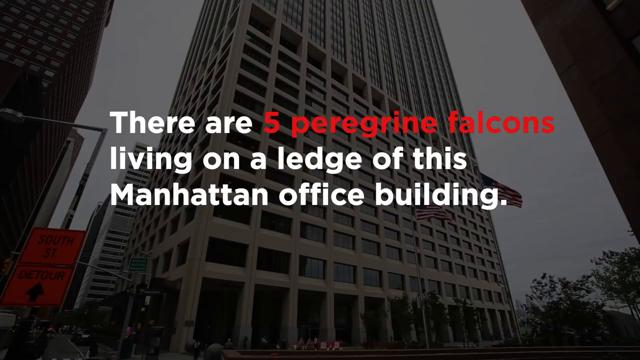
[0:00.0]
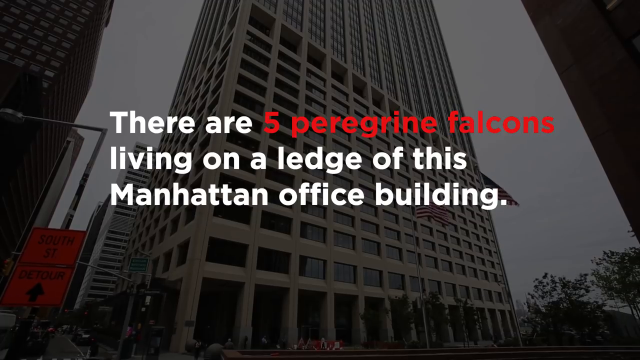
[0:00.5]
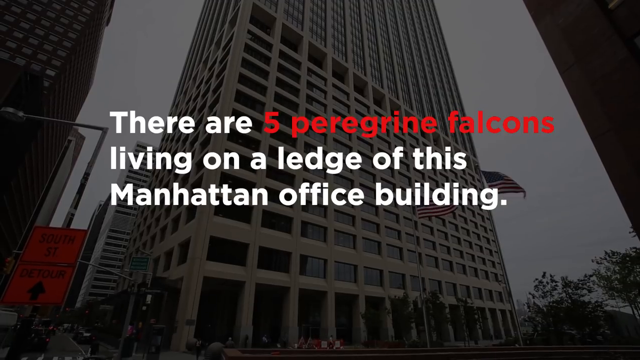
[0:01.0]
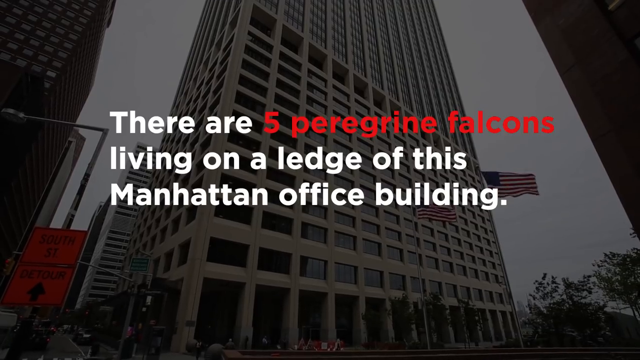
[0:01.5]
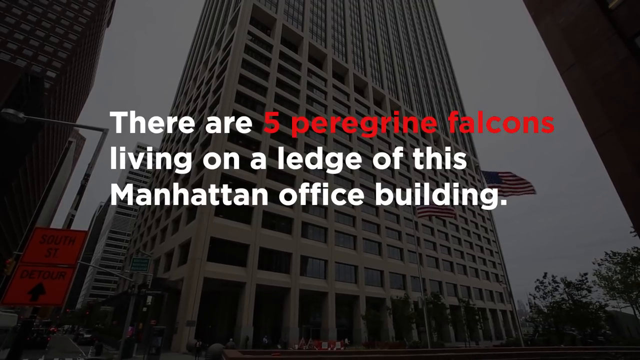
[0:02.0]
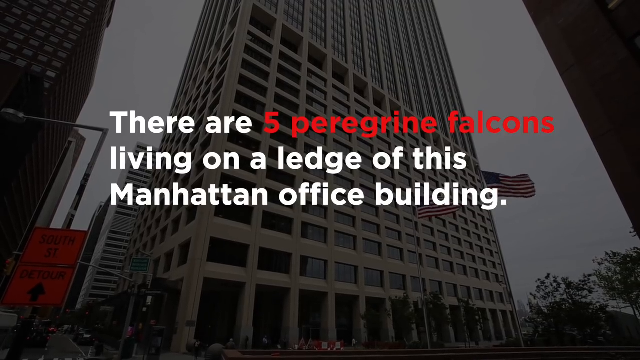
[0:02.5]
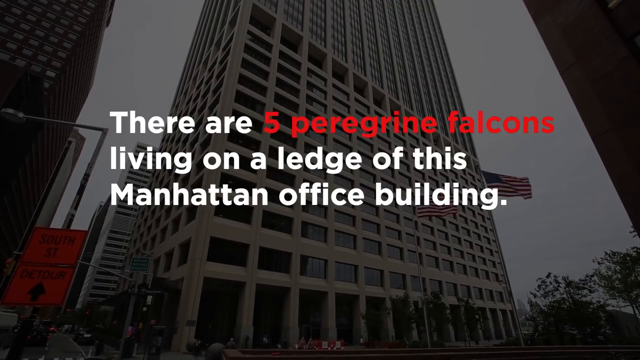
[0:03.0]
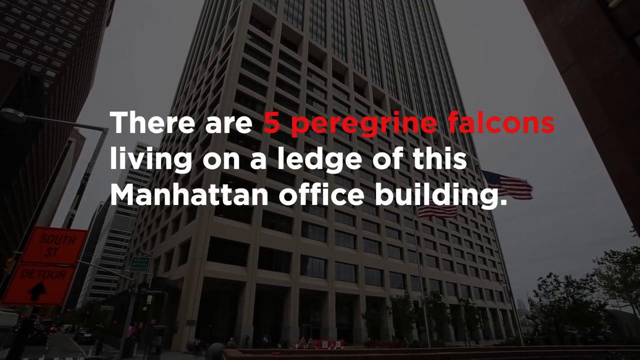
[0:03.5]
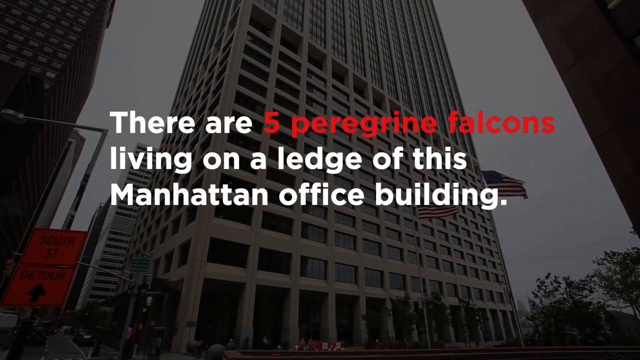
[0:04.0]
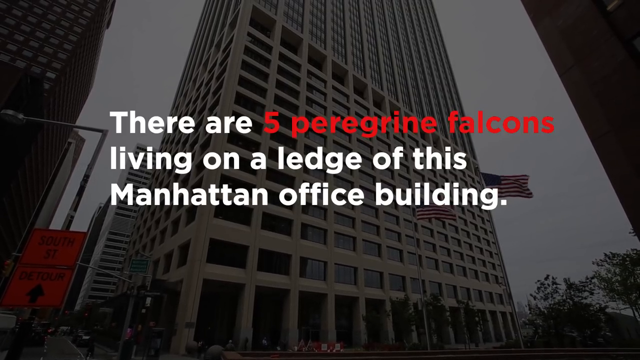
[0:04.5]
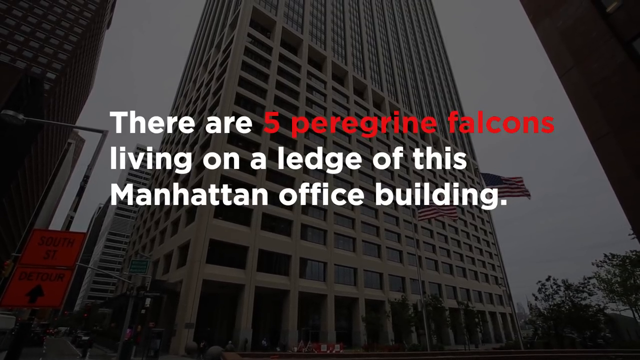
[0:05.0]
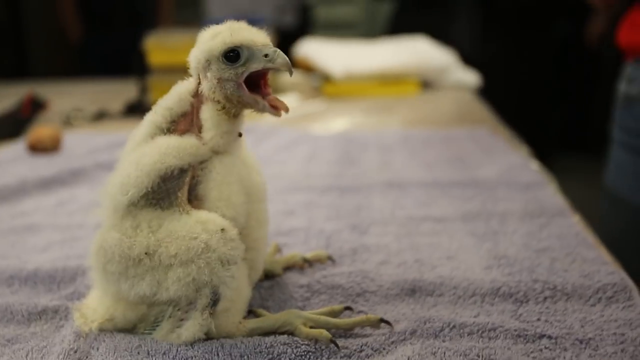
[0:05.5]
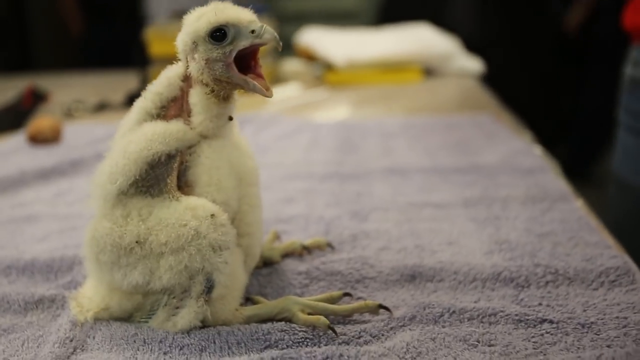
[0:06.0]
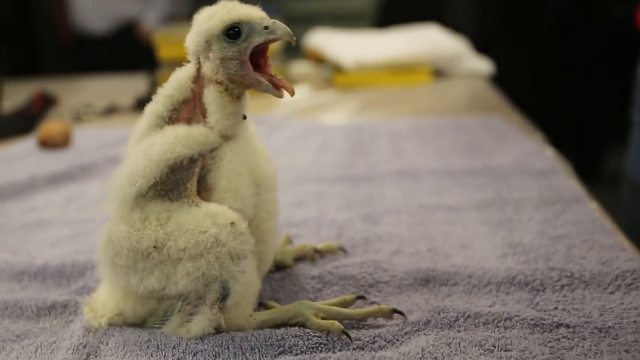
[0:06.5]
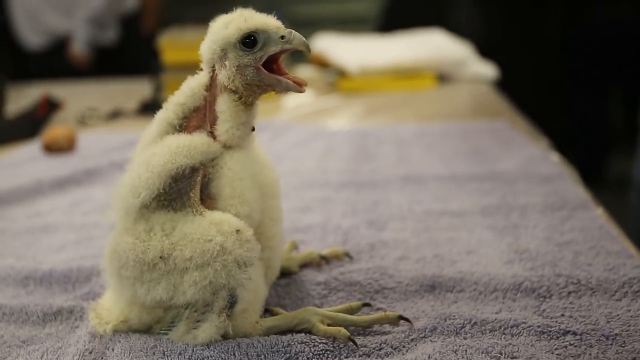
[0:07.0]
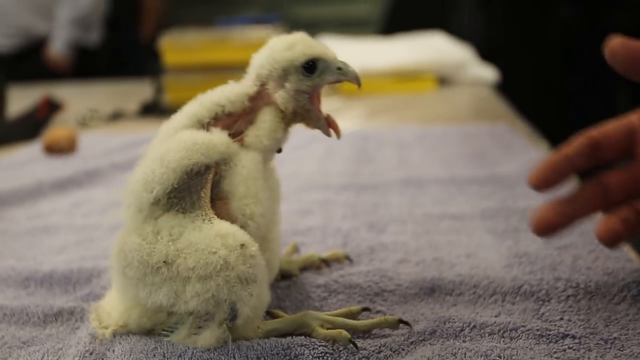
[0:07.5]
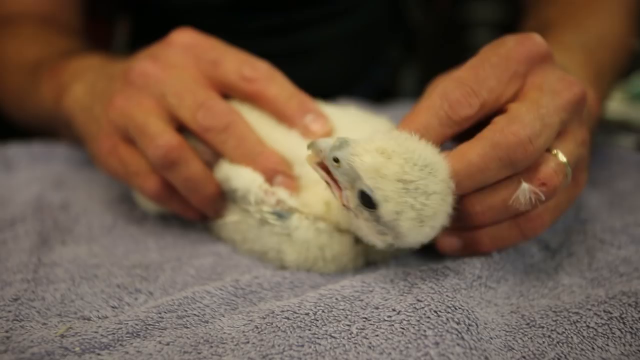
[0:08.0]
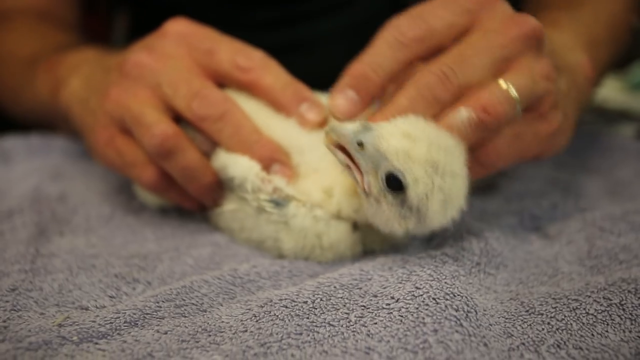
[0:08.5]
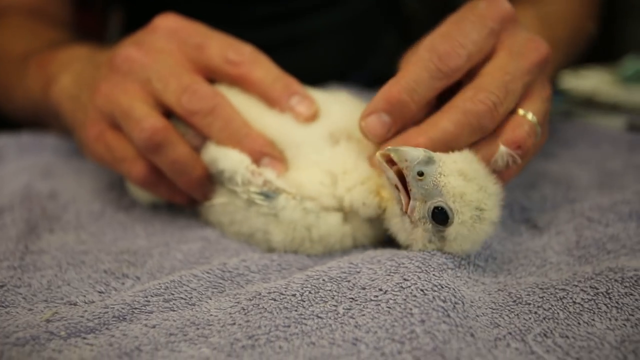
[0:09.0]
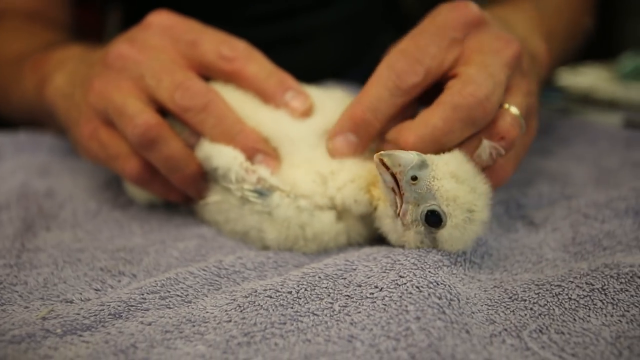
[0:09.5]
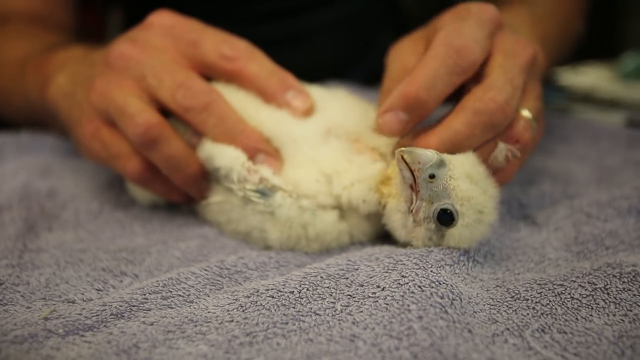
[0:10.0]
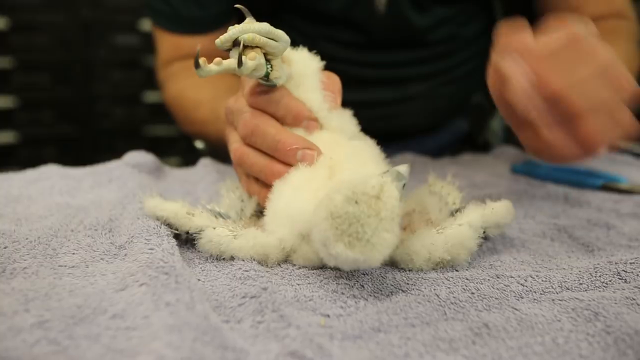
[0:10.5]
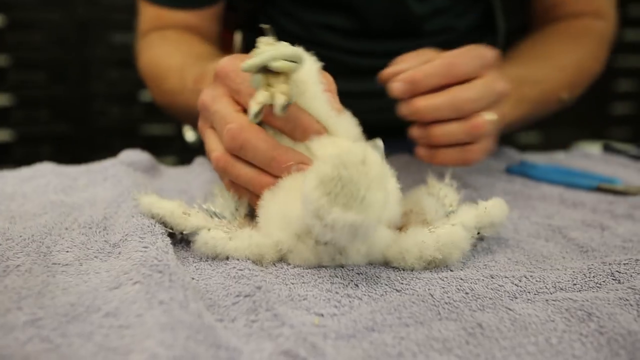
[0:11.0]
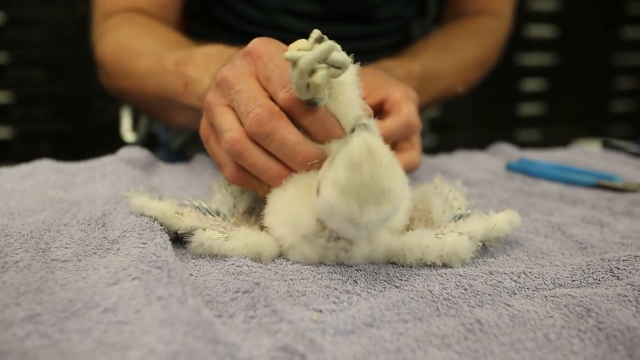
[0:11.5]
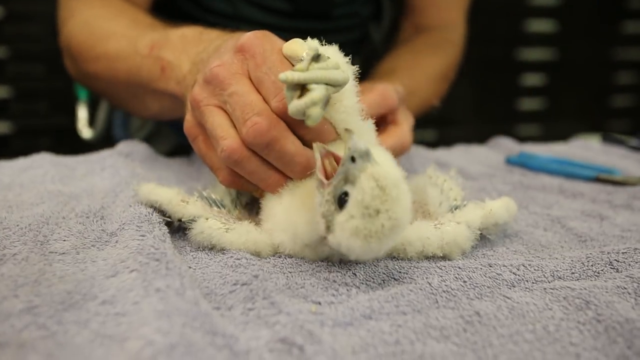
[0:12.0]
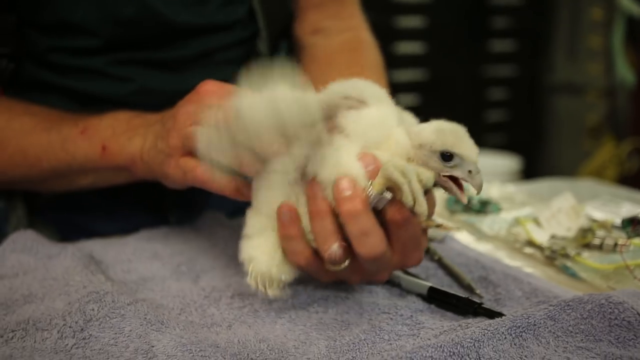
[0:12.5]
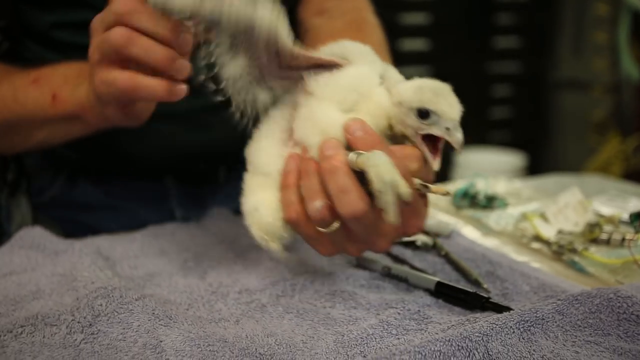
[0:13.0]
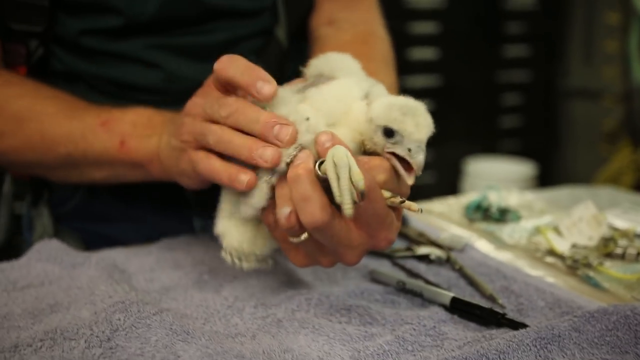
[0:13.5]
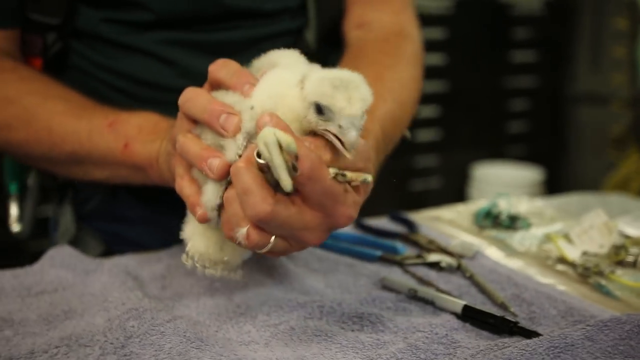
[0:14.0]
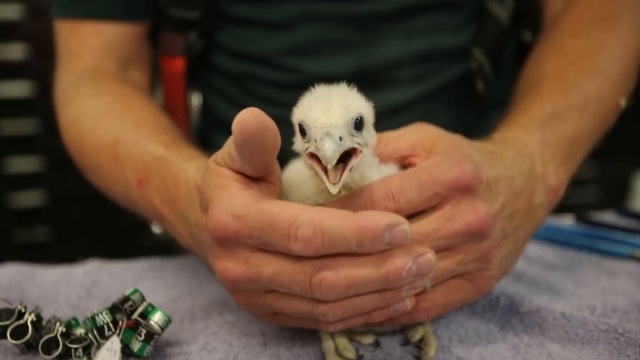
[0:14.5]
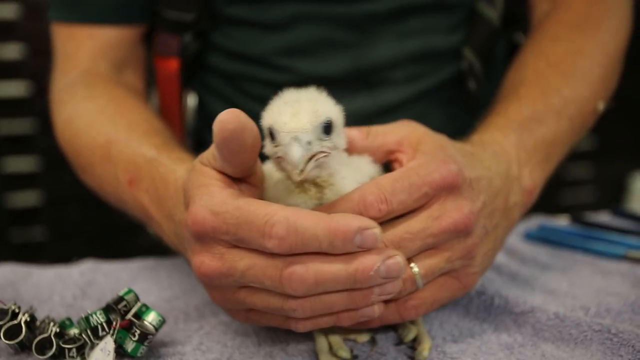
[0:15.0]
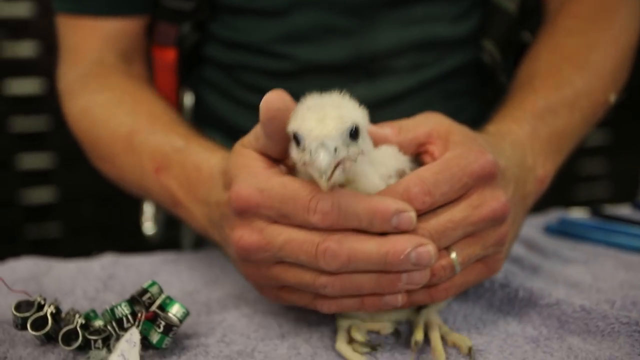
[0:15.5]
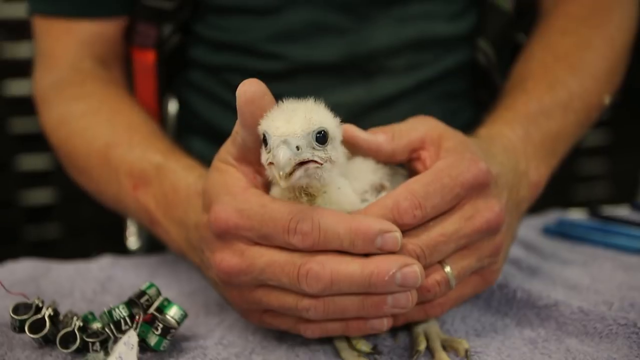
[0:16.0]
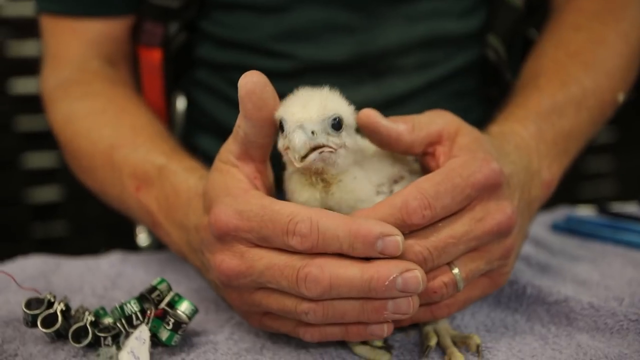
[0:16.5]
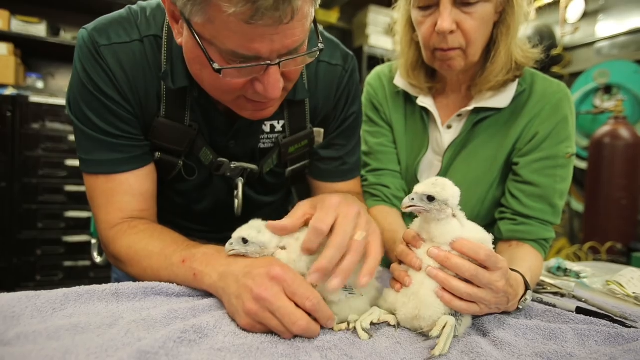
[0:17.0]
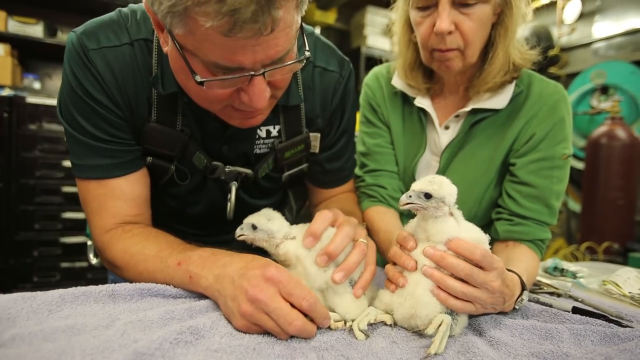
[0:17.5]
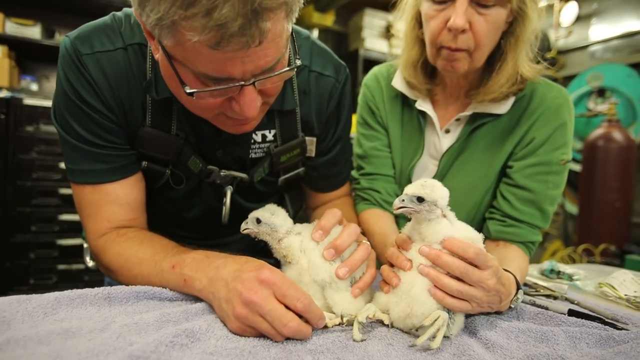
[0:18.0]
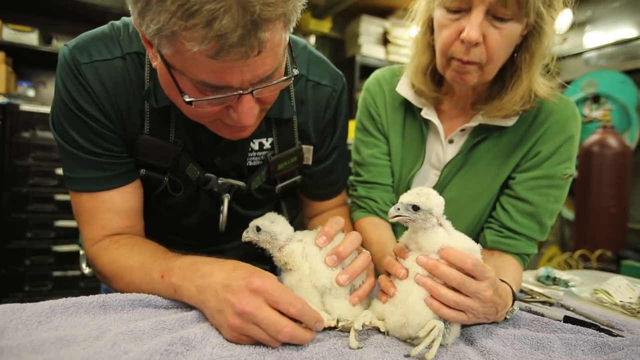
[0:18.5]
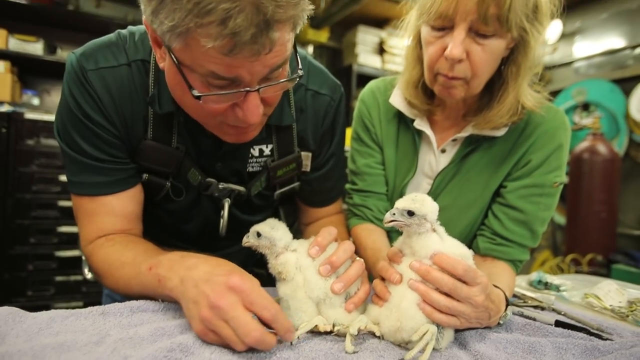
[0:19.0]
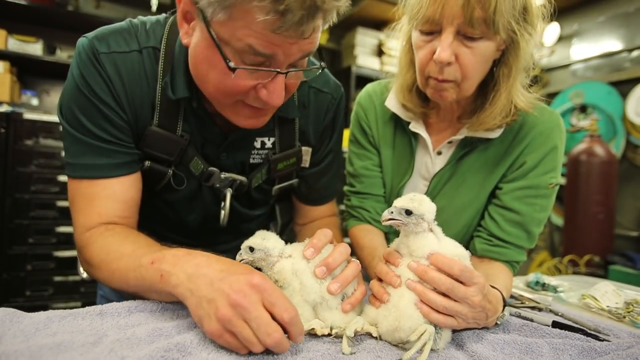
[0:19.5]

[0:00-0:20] A photograph of an office building appears with text in front of it that reads, "There are five peregrine falcons living on a ledge of this Manhattan office building." A series of images follows showing peregrine falcon chicks sitting on a table covered with a light blue towel. In the first scene a chick is sitting by itself, looking around with its beak open, and hands reach in. Next, two hands hold a falcon chick down on a towel, apparently stroking the falcon's neck with one finger. A different view shows a falcon chick on a towel as someone examines it, with the examiner's hands visible. In the next image the person holds the peregrine falcon in their left hand and appears to inspect its wing with their right hand. In another scene someone has their hands cupped around the front of a falcon seated on the towel.